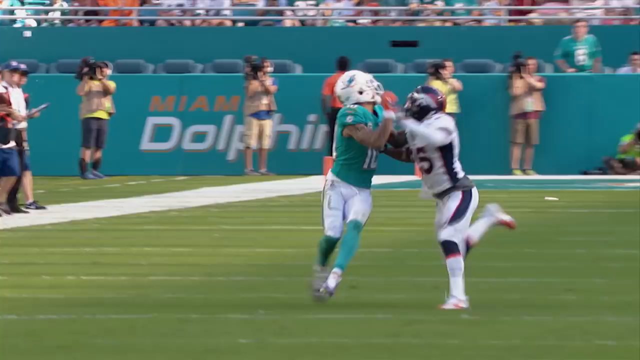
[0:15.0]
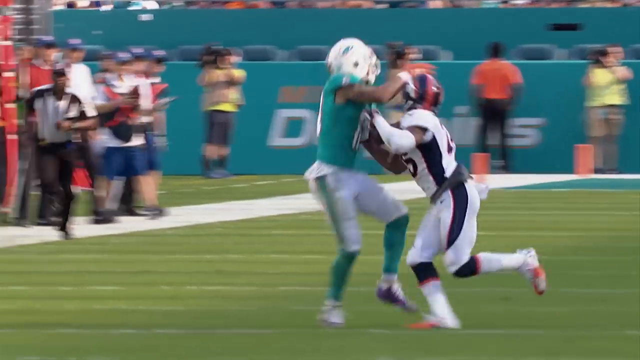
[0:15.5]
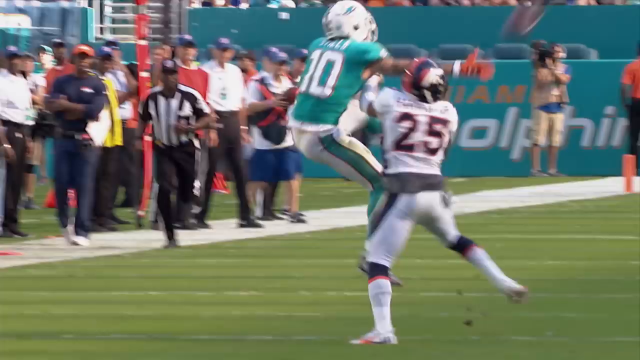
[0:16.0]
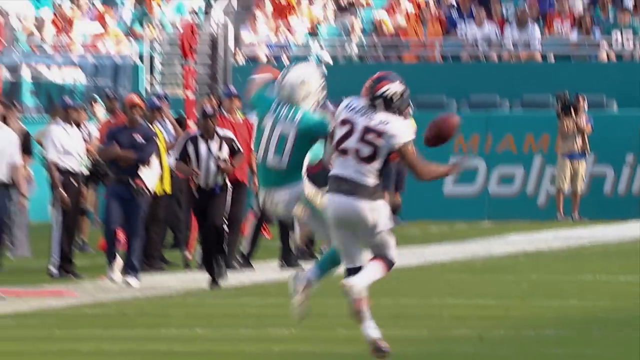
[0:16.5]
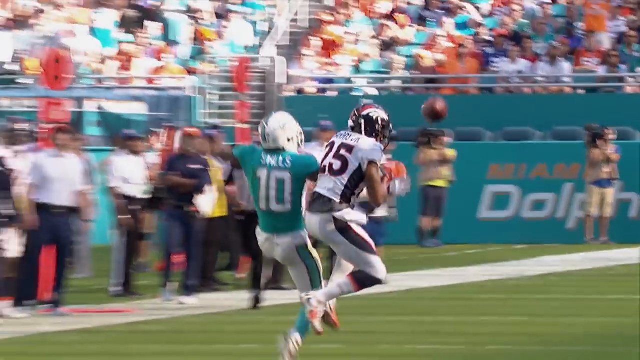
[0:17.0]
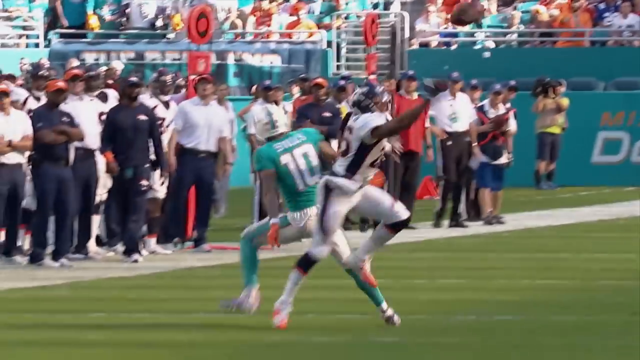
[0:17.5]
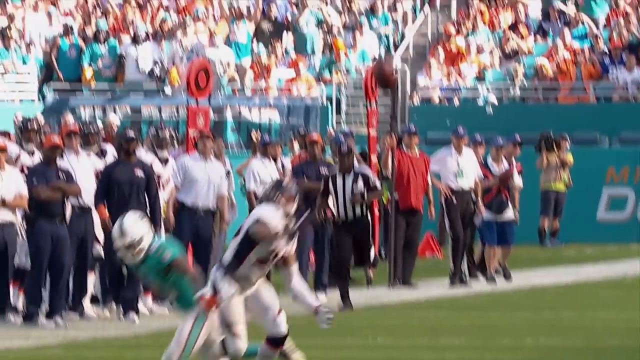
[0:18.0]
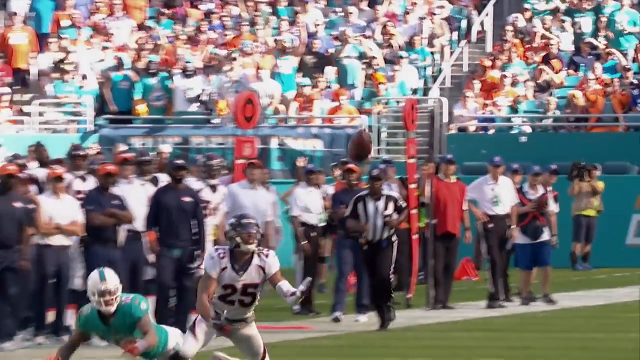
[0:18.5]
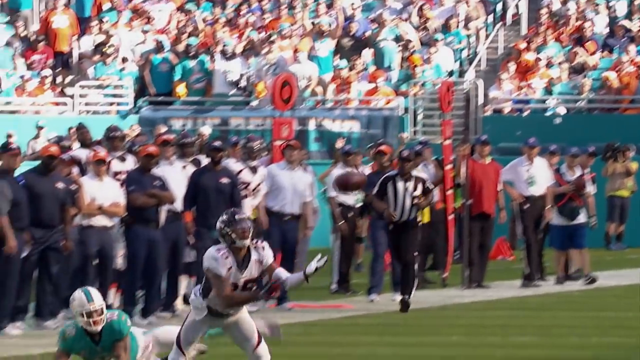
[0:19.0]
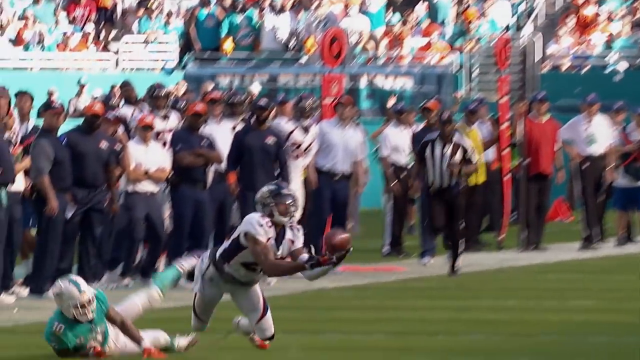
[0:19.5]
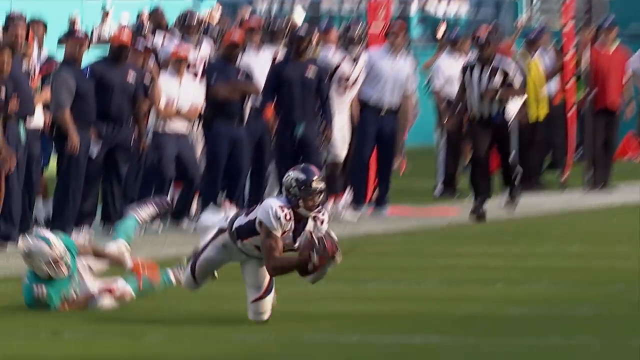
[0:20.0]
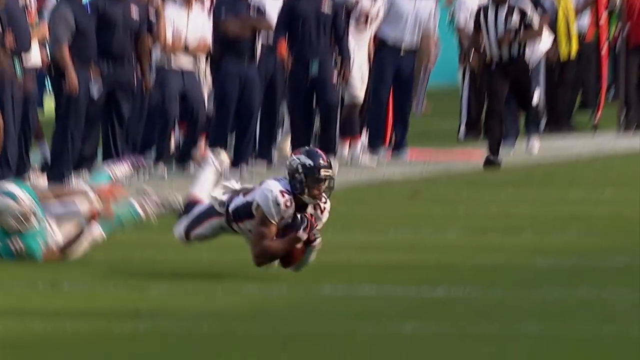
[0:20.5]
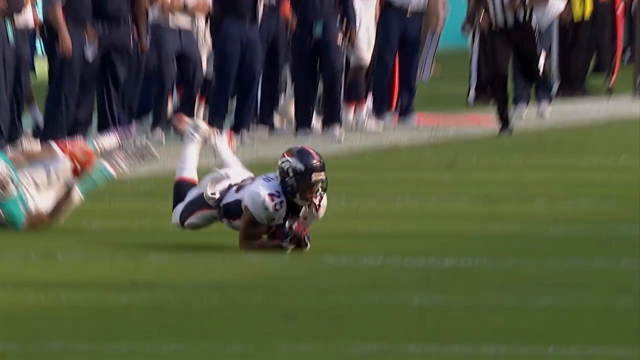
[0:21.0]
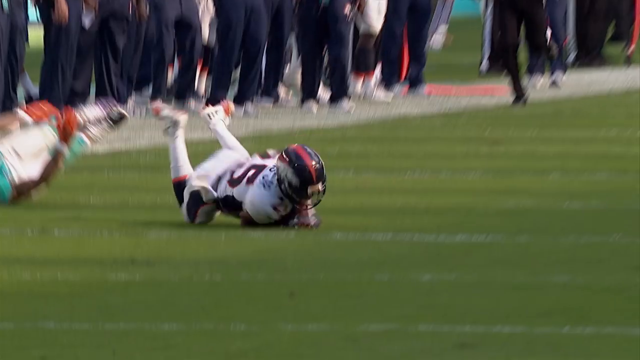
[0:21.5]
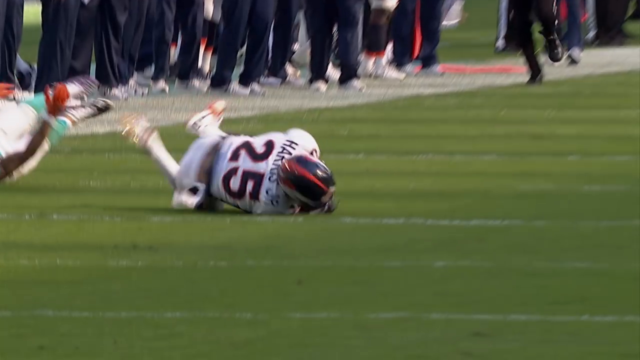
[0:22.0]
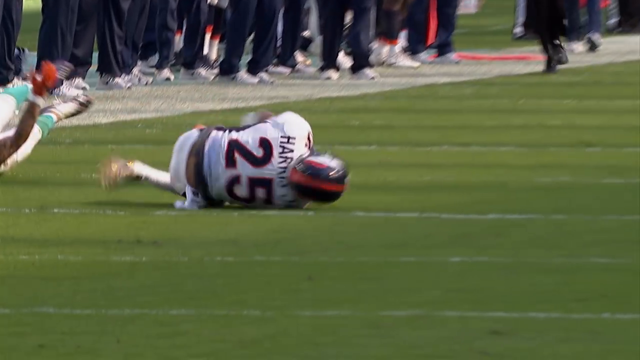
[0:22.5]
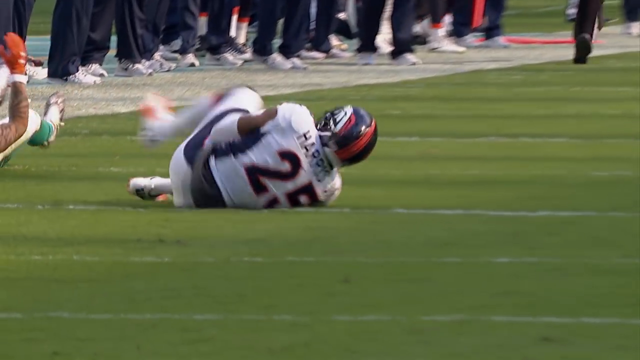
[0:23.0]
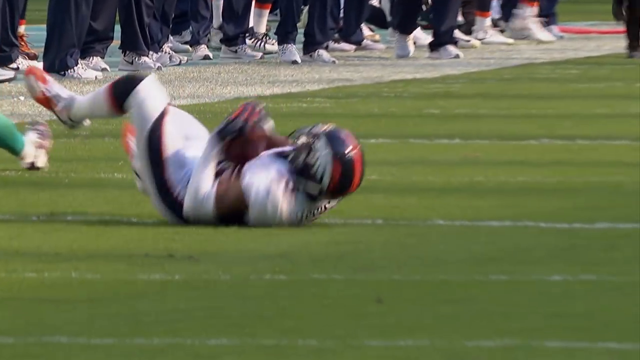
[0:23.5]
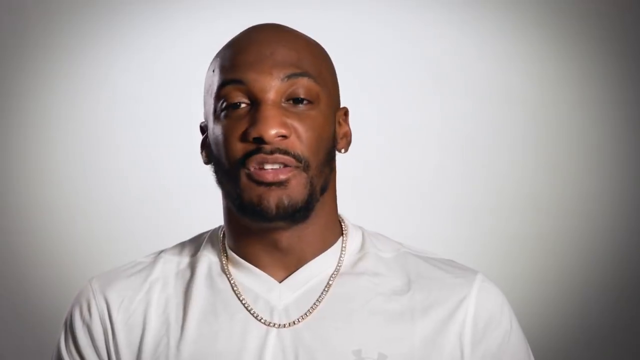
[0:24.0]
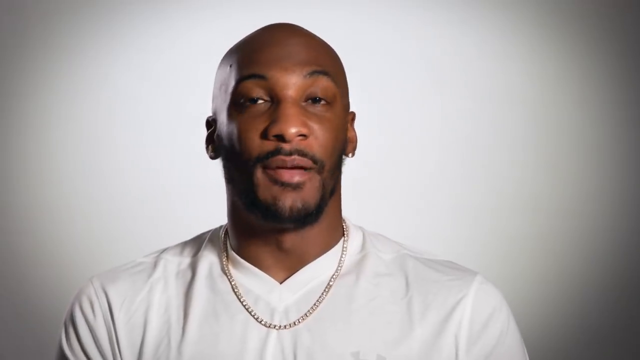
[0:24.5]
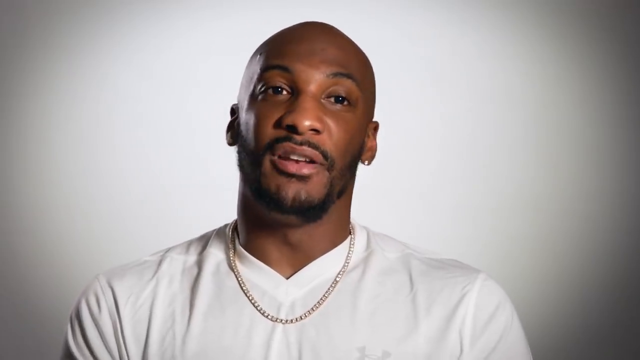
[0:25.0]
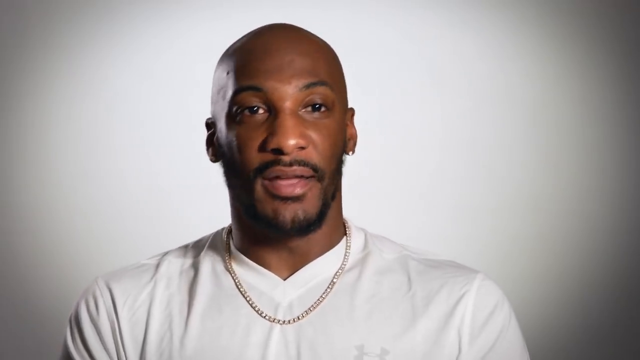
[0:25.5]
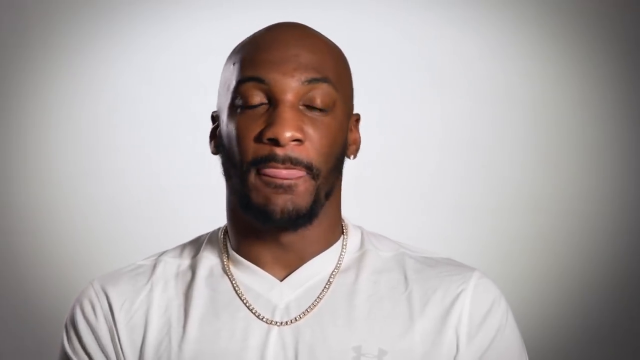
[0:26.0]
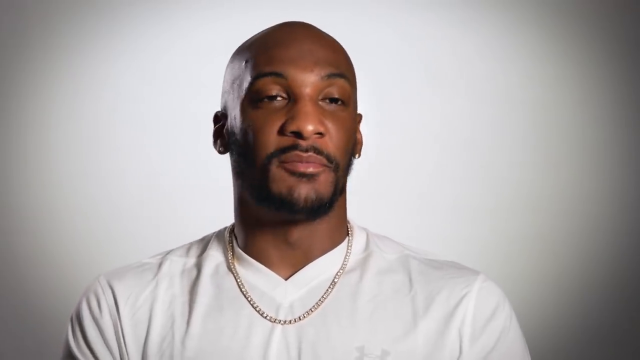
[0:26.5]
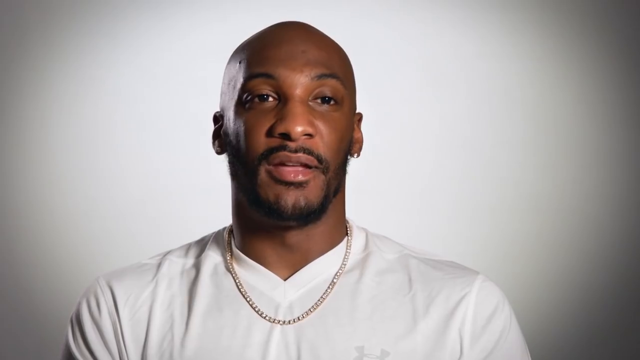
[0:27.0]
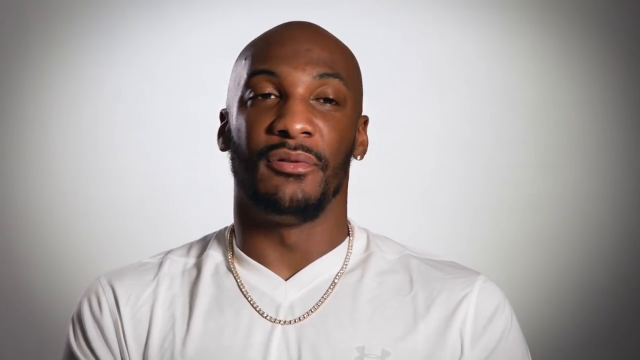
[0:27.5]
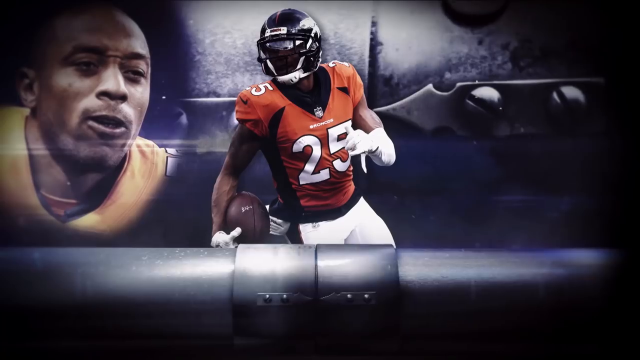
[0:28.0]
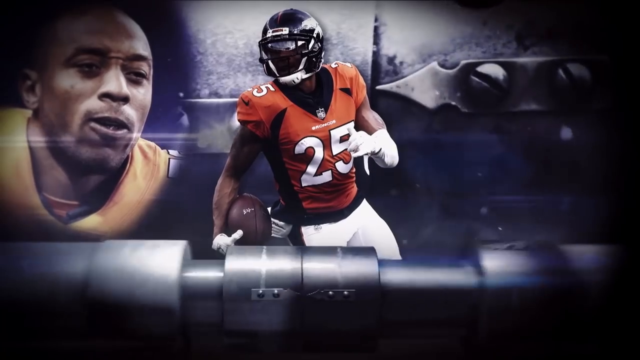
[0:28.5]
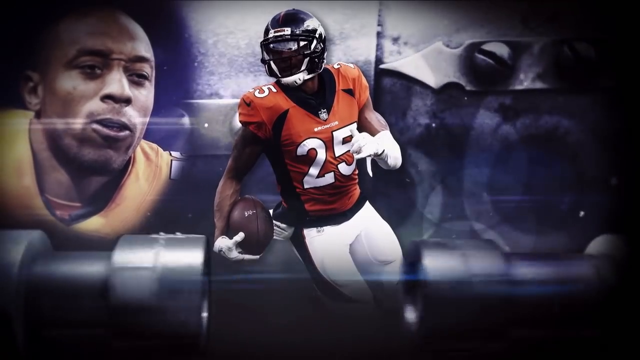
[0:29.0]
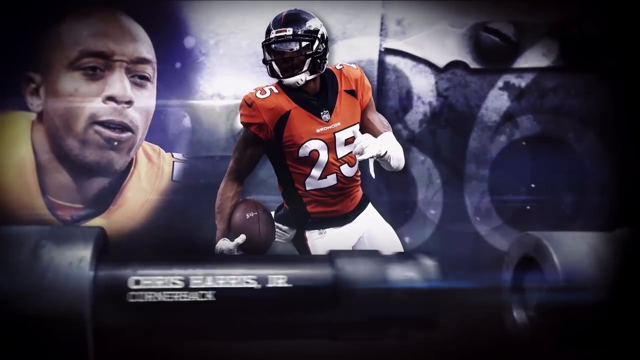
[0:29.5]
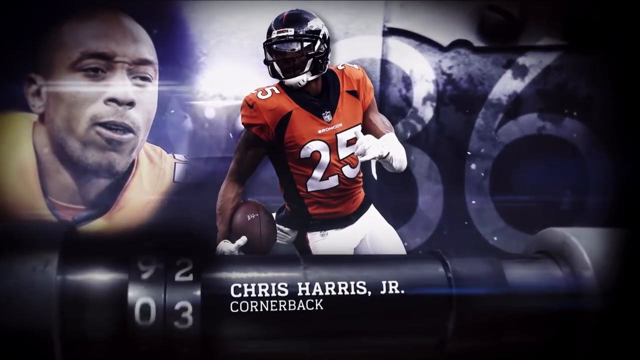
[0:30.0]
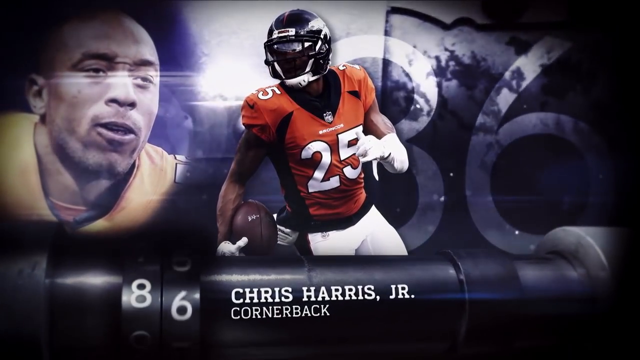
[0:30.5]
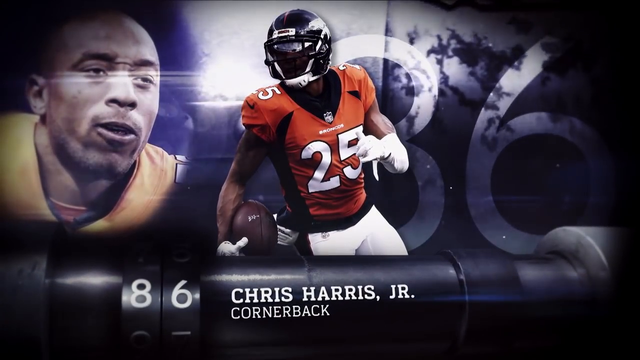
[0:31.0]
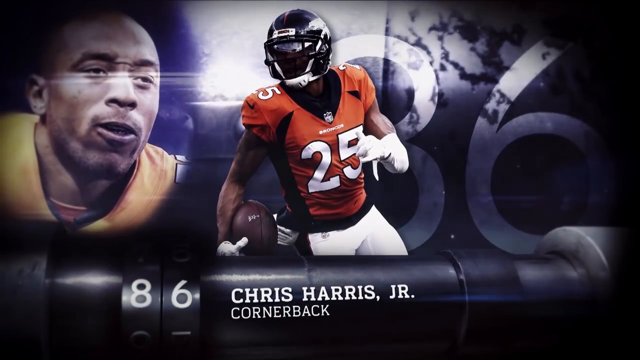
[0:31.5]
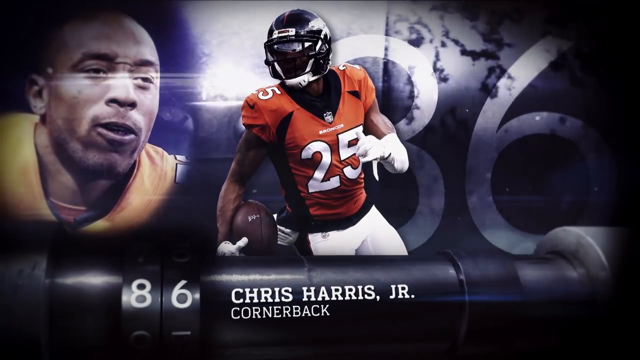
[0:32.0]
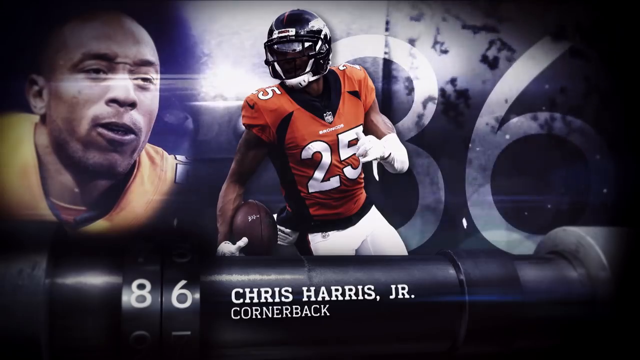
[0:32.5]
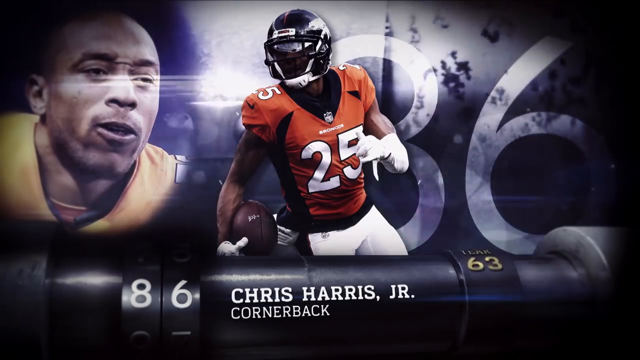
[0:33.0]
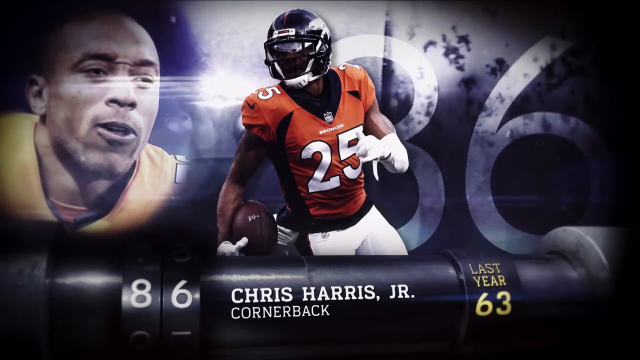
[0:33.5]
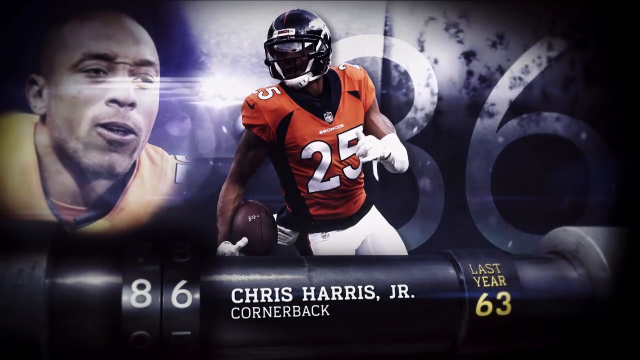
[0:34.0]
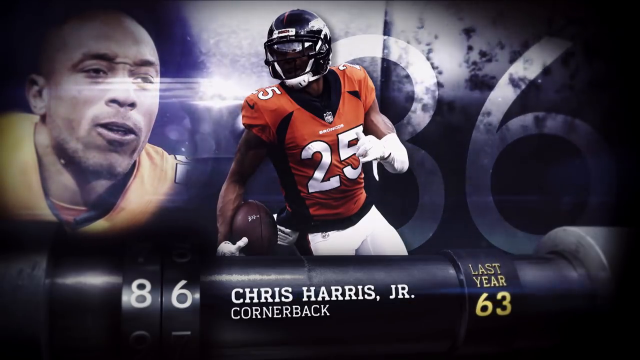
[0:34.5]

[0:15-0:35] Game footage shows the interception by Chris Harris Jr. against a Miami Dolphins player: he falls to the ground, catches the football and rolls onto his back. The video cuts back to Aqib Talib talking to the camera, apparently about Chris Harris Jr. Then a graphic appears, presumably of Chris Harris Jr., wearing number 25 in an orange Broncos jersey with white pants, alongside another picture of him in uniform showing most of his face. The graphic reads "Chris Harris Jr. cornerback" with "86" next to his name, while the jersey in the picture is number 25. It appears to be some sort of celebration or tribute to Chris Harris Jr. and his accomplishments.